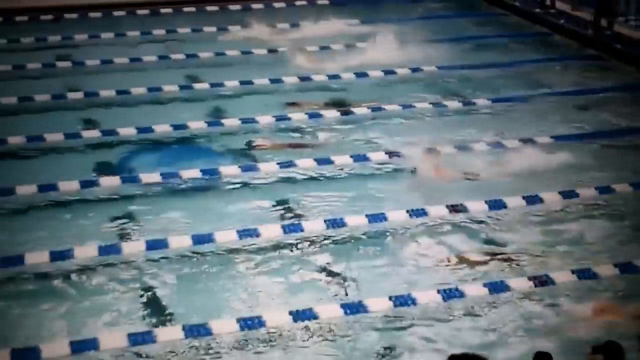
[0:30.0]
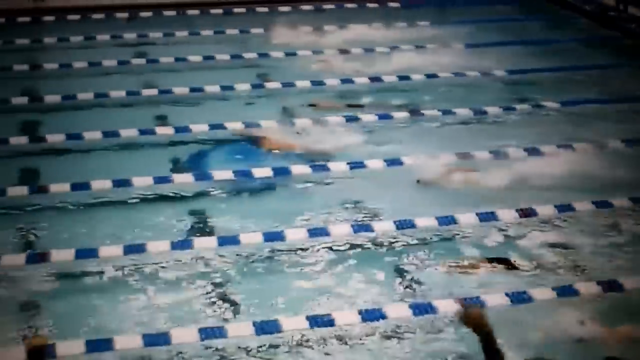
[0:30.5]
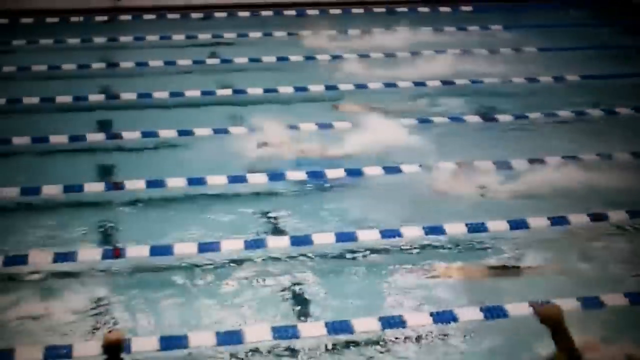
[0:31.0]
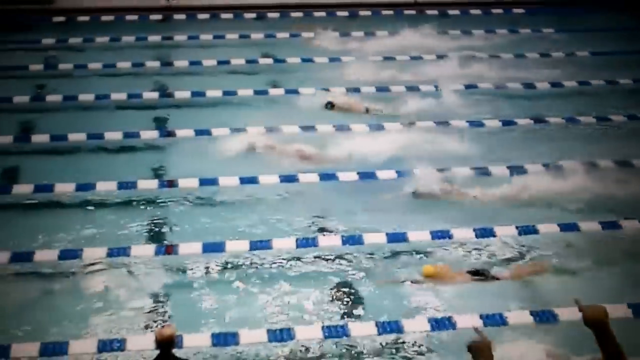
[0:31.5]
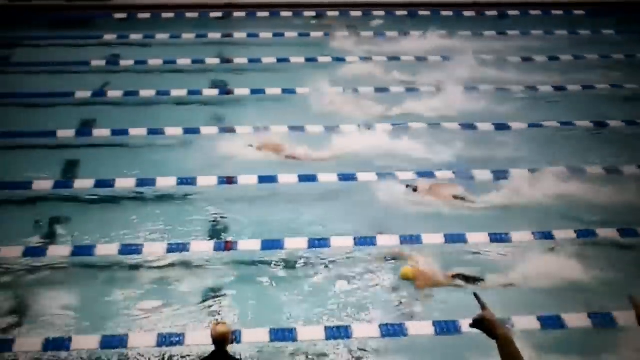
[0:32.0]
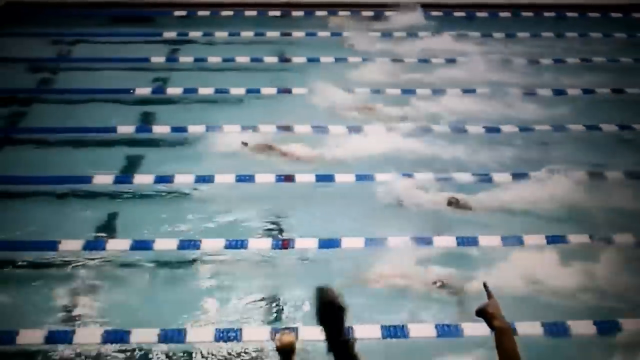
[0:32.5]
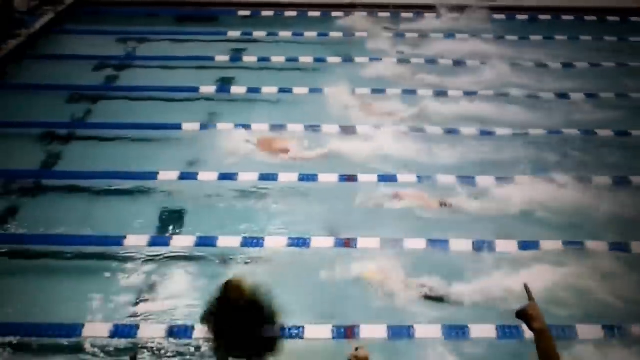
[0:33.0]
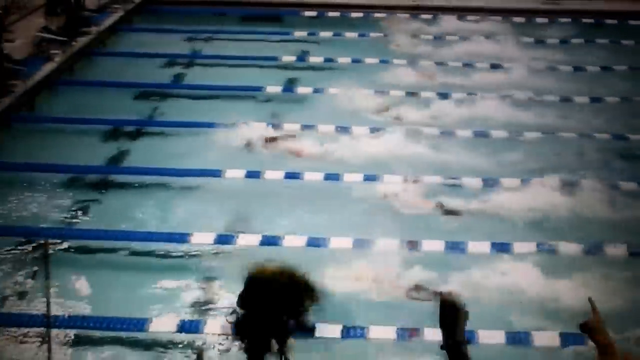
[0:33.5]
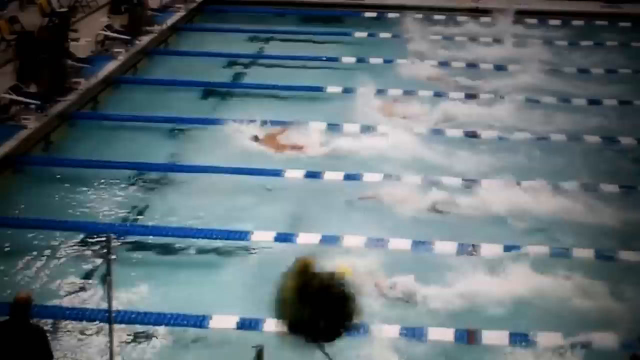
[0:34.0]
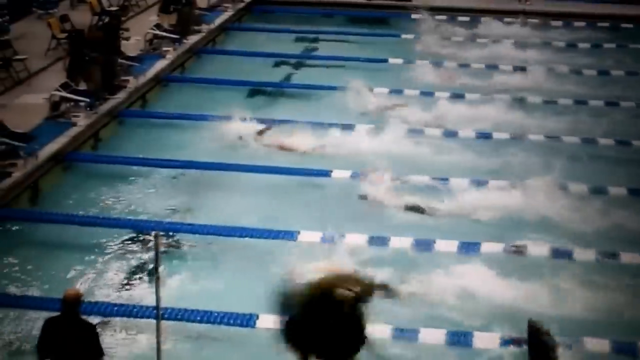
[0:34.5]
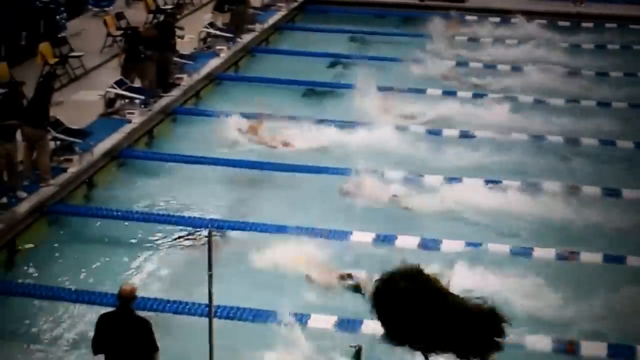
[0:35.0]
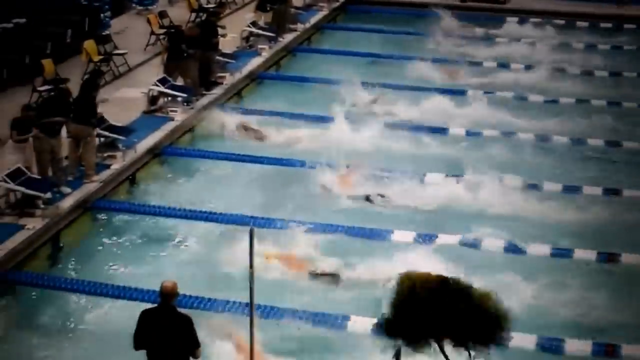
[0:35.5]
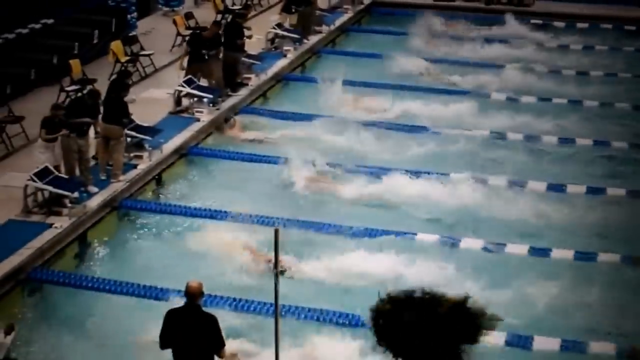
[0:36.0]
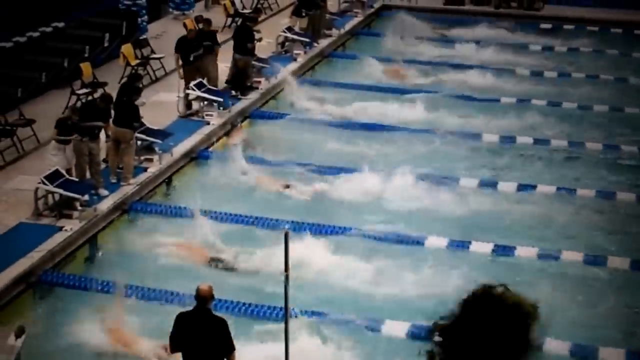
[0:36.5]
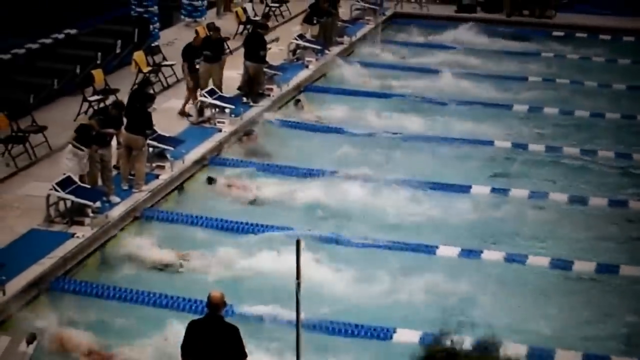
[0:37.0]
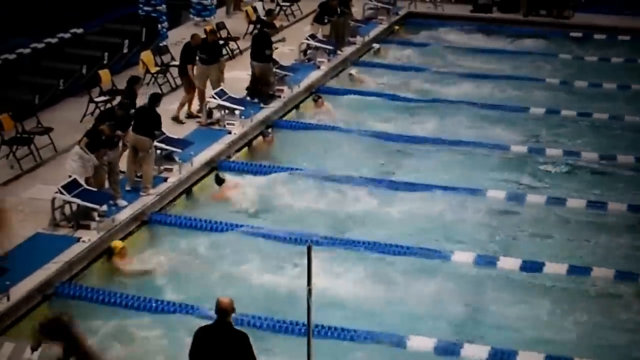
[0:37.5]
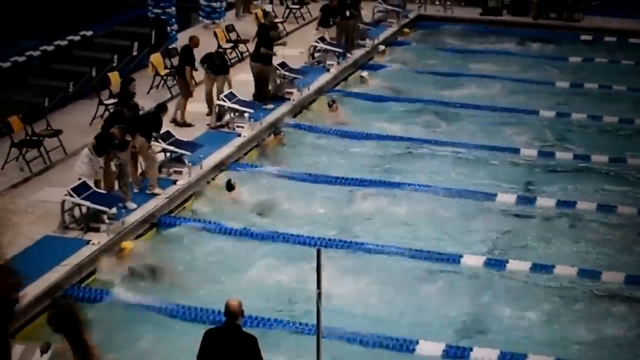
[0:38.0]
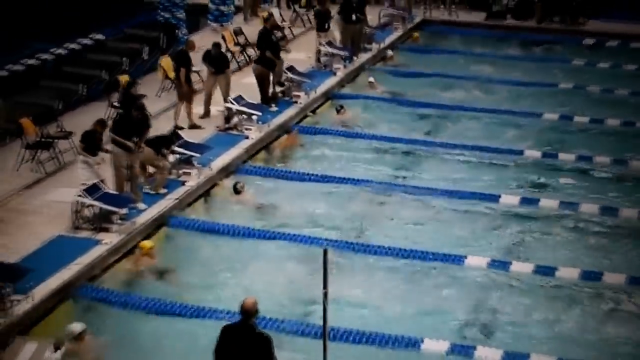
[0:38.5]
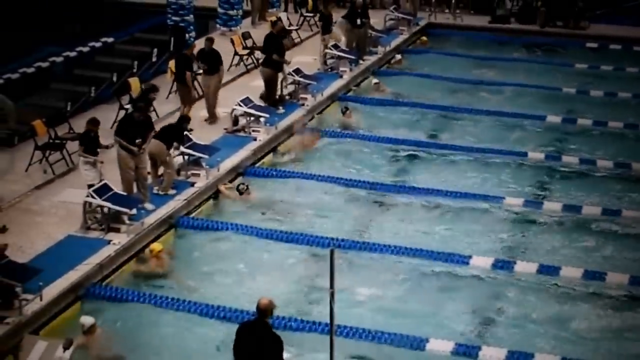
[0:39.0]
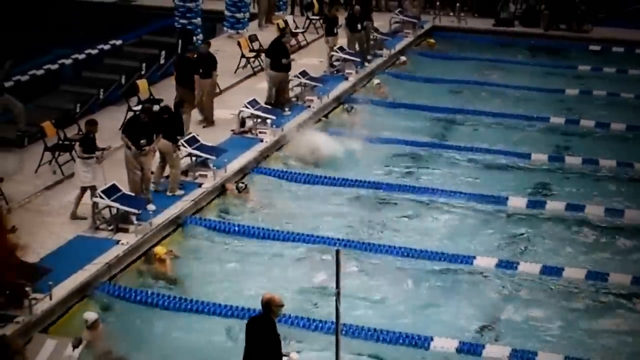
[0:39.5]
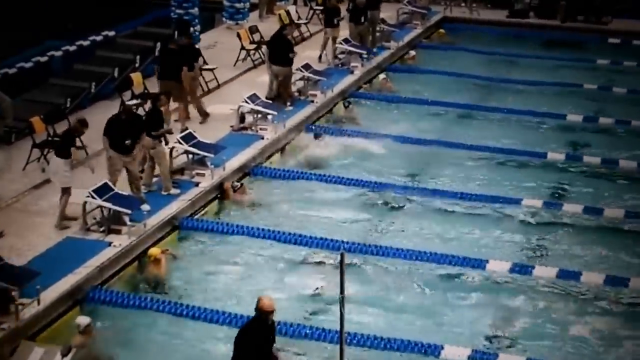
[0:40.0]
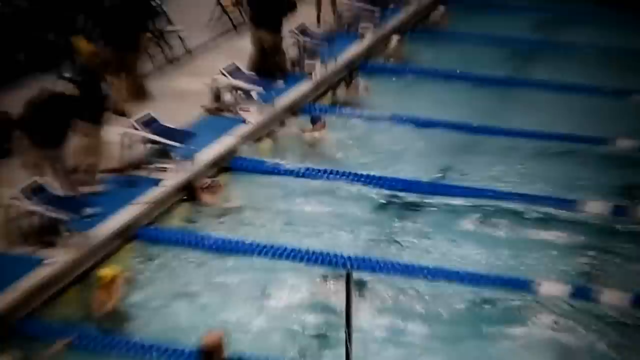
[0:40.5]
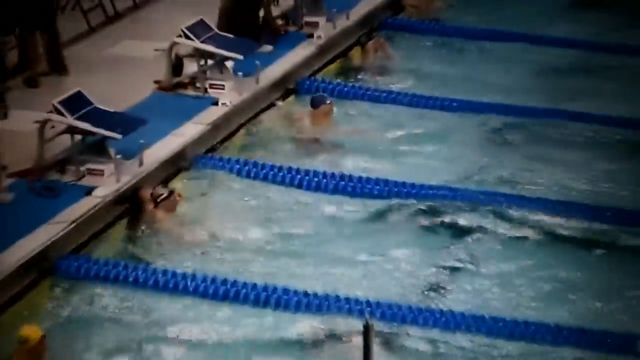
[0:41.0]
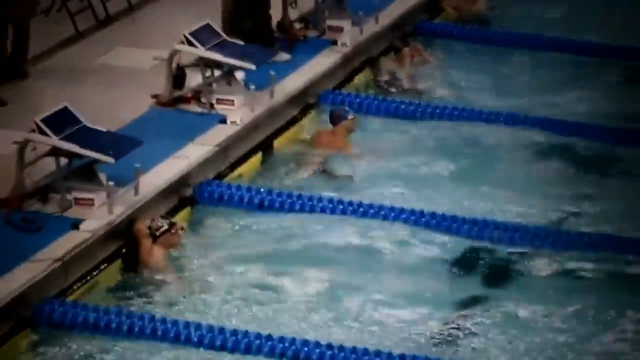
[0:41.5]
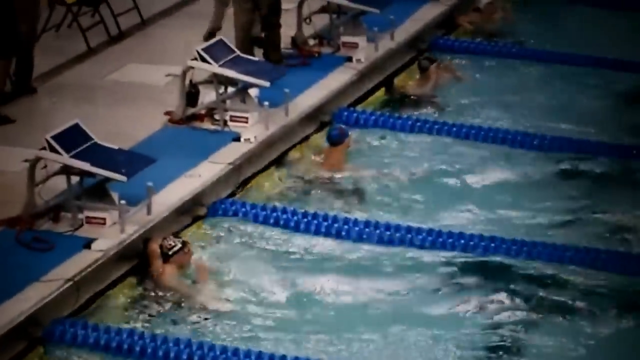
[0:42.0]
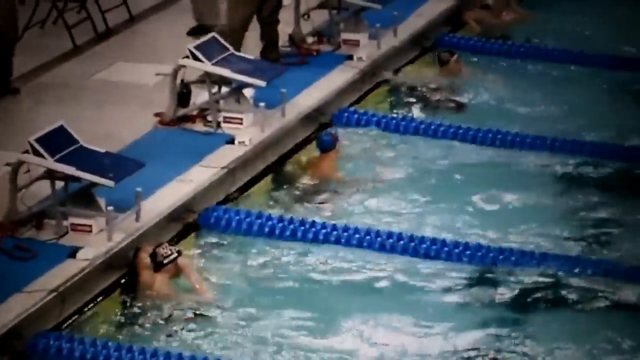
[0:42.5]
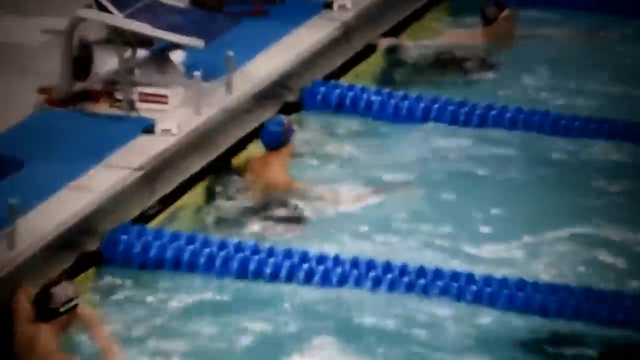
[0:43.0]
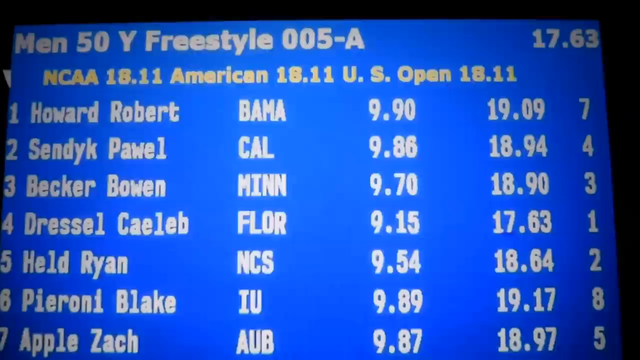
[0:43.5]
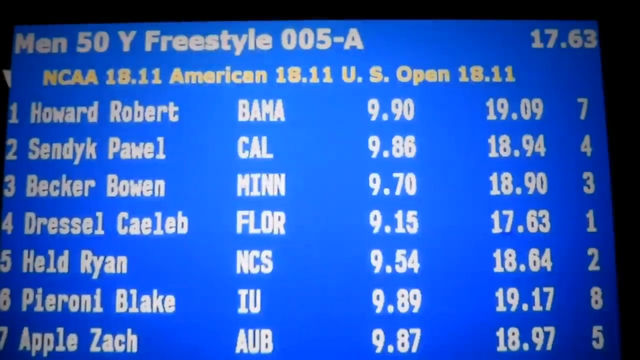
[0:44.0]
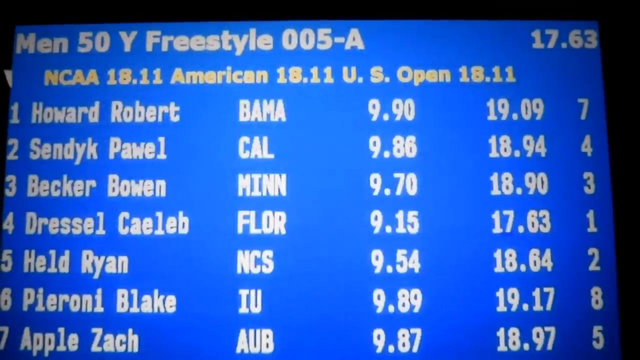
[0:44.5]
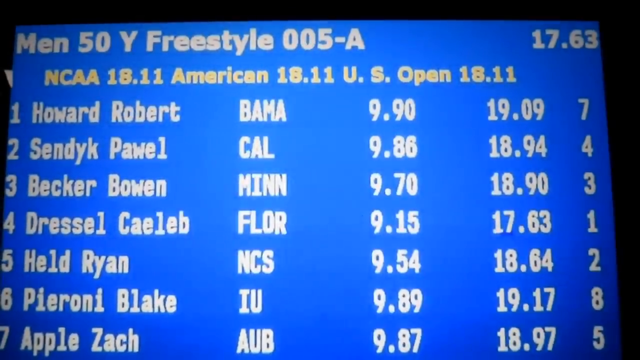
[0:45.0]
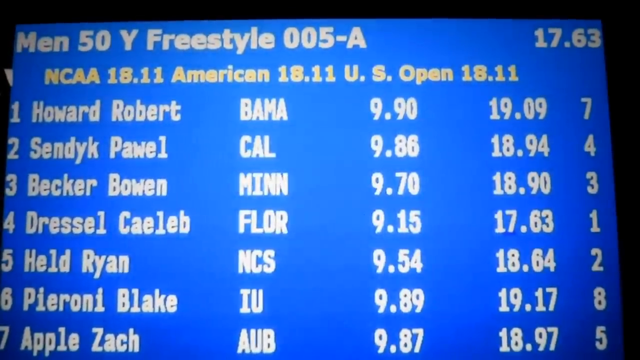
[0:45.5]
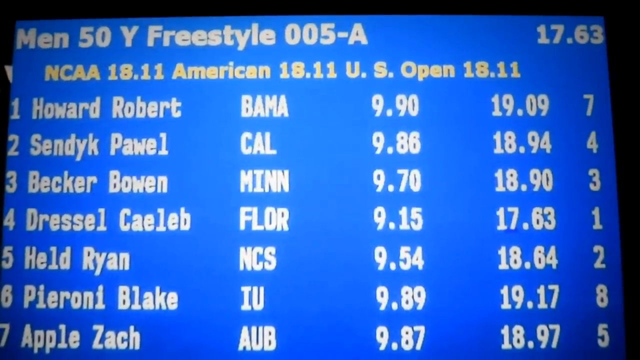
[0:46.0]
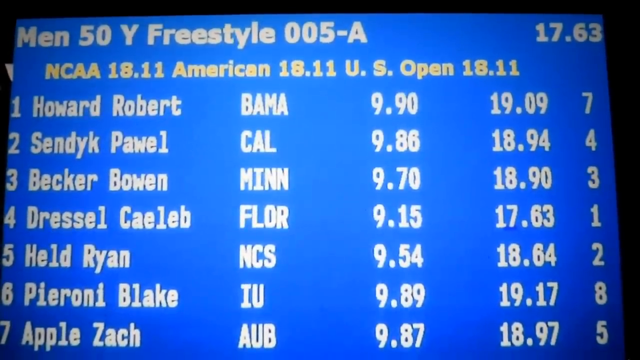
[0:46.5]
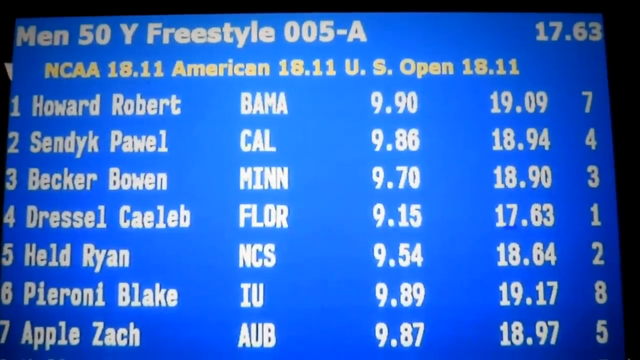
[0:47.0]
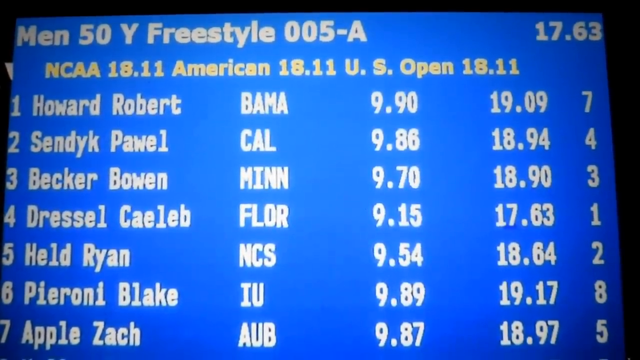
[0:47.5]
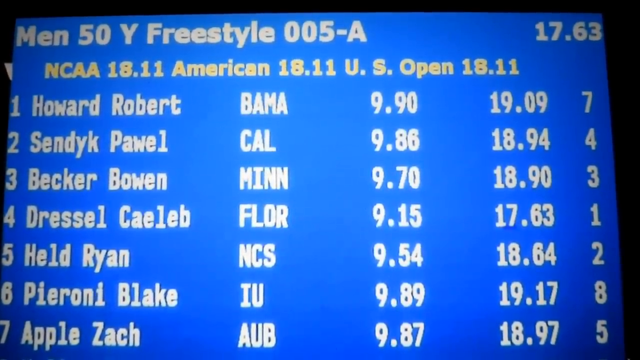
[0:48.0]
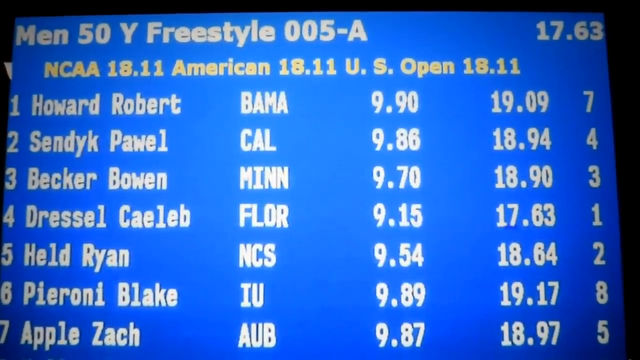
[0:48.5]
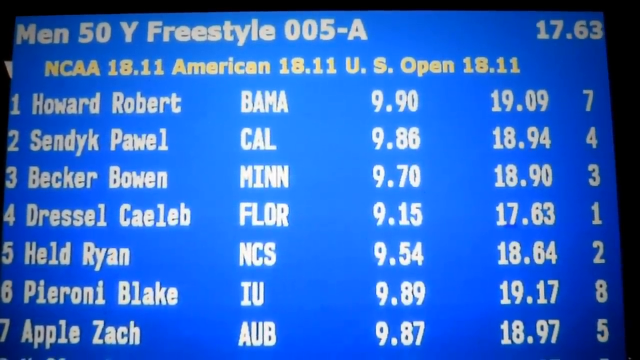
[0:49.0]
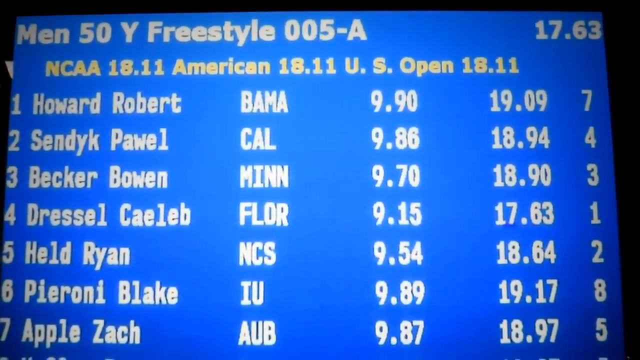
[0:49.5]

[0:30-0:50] The swimmers make their way back to the starting end. There is a clear winner, a man in a black swim cap in the middle lane, who is very excited and splashes his arms in the water. A scoreboard then appears reading "men 50 yard freestyle" with "NCAA 18.11 American 18.11 US Open 18.11." It lists "Howard Robert Bama 9.90," apparently in 7th place; "Sendyk Pawel Cal 9.86 18.94" with a 4; "Becker Bowen MINN 9.70 18.93"; "Dressel Caeleb FLOR 9.15 17.63" with a 1; "Held Ryan NCS 9.54 18.64" with a 2; "Pieroni Blake IU 9.89"; and "Apple Zach AUB 9.87 18.97" with a 5. After the winner reaches the end of the pool, the crowd is no longer seen cheering.